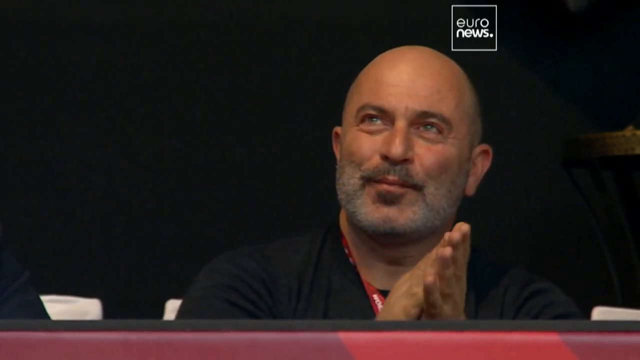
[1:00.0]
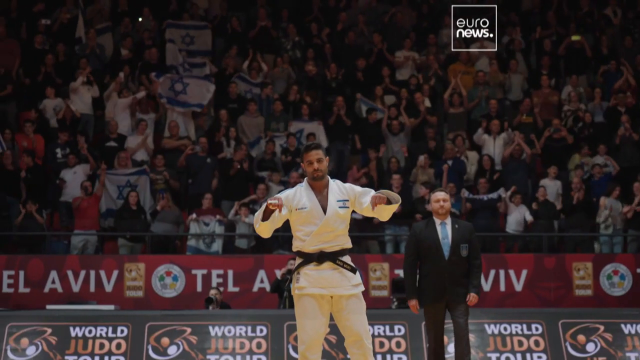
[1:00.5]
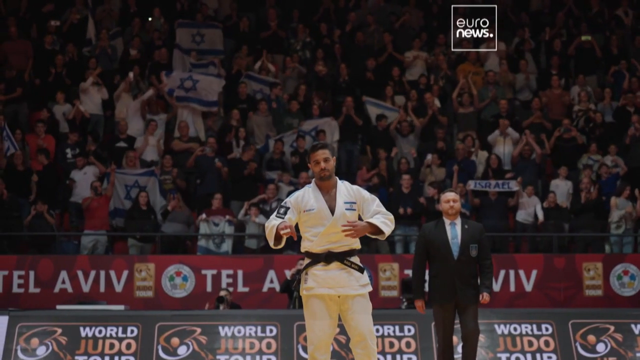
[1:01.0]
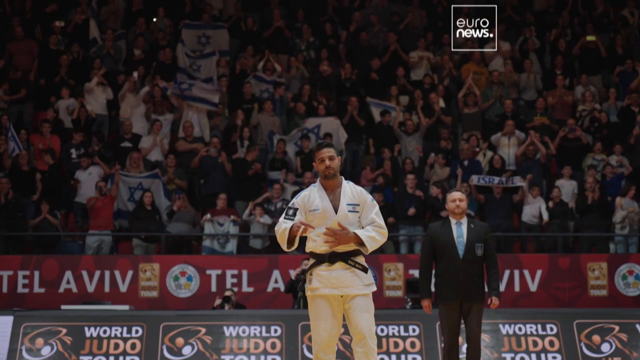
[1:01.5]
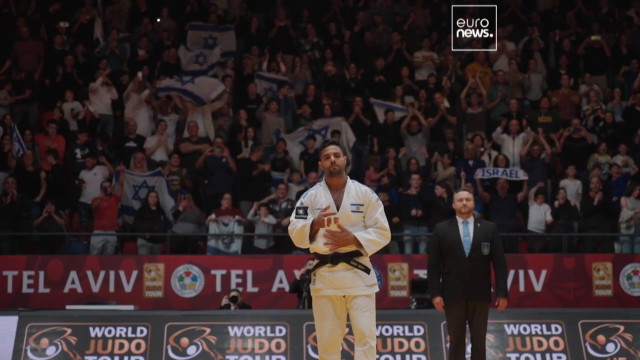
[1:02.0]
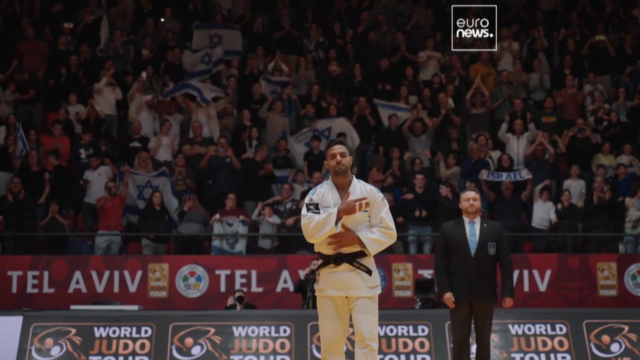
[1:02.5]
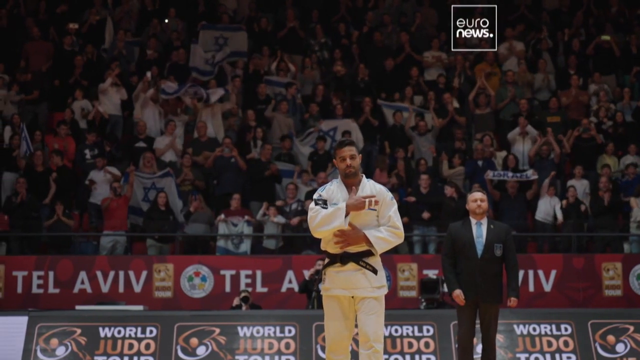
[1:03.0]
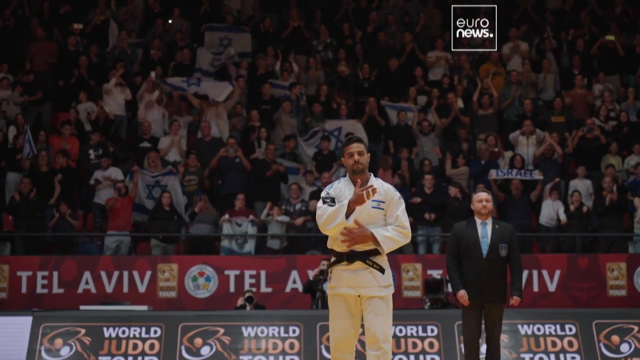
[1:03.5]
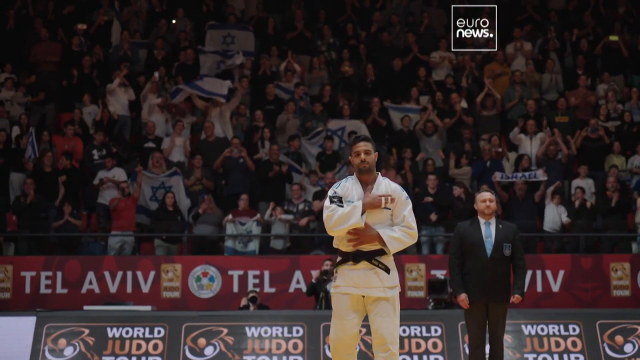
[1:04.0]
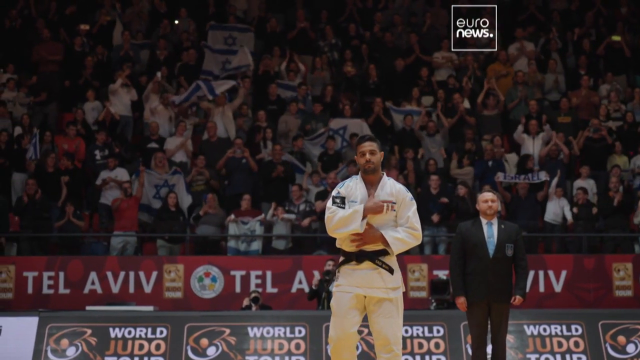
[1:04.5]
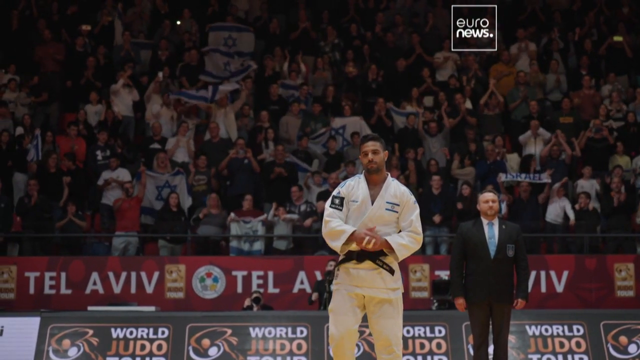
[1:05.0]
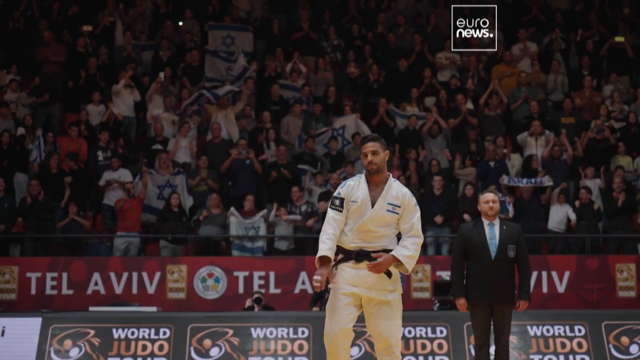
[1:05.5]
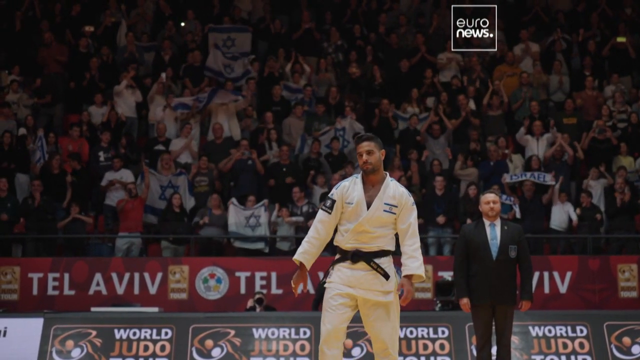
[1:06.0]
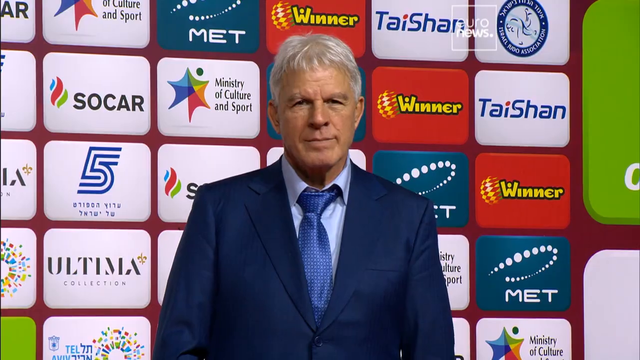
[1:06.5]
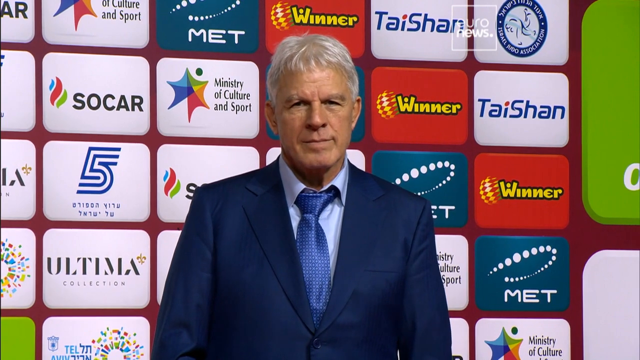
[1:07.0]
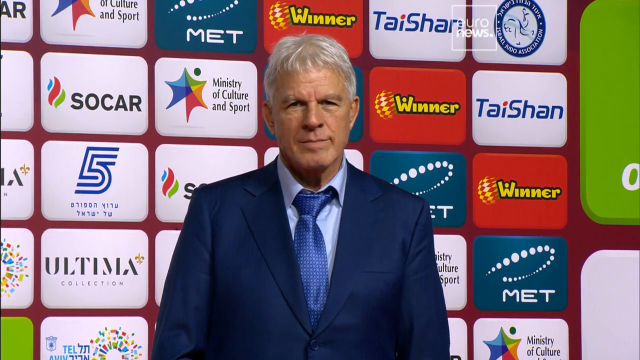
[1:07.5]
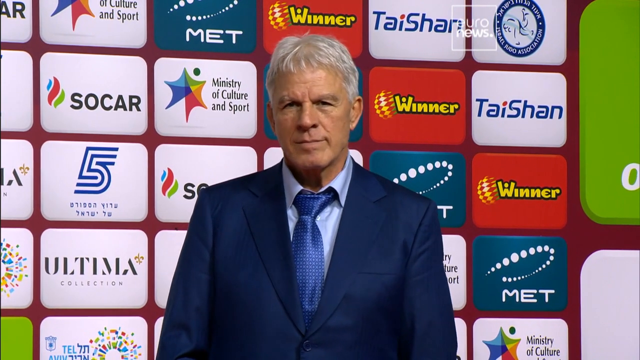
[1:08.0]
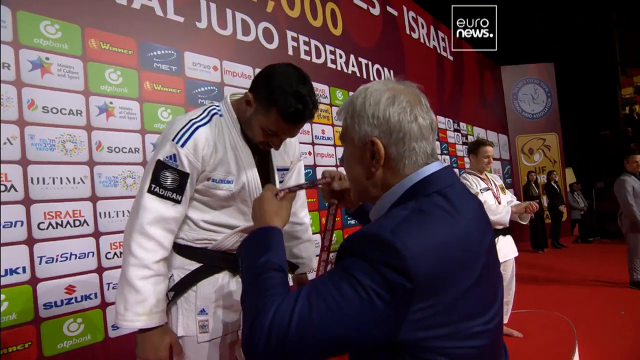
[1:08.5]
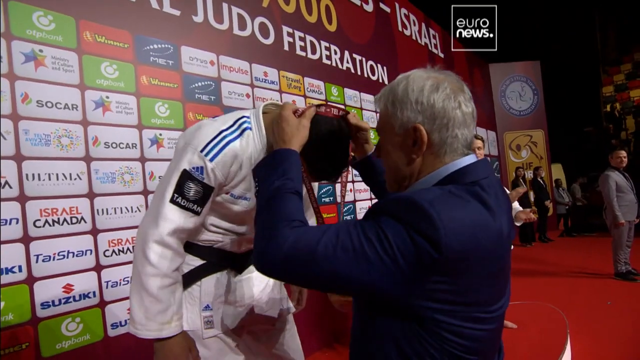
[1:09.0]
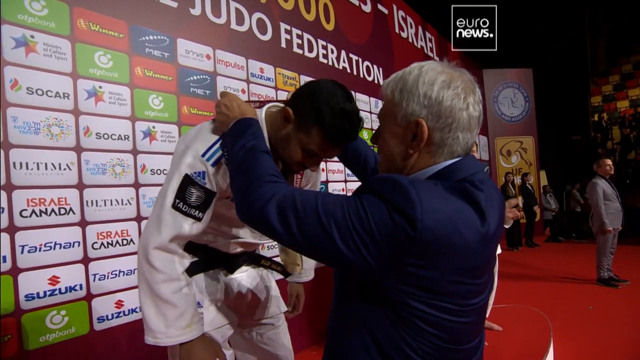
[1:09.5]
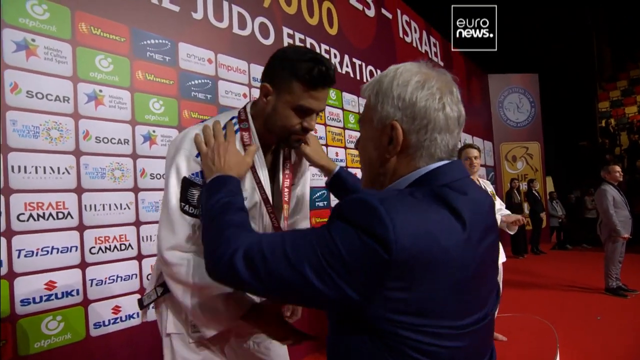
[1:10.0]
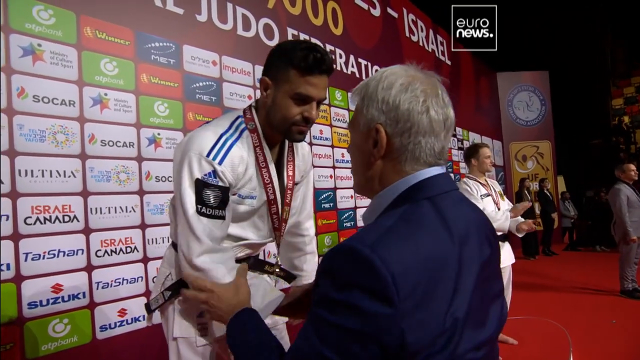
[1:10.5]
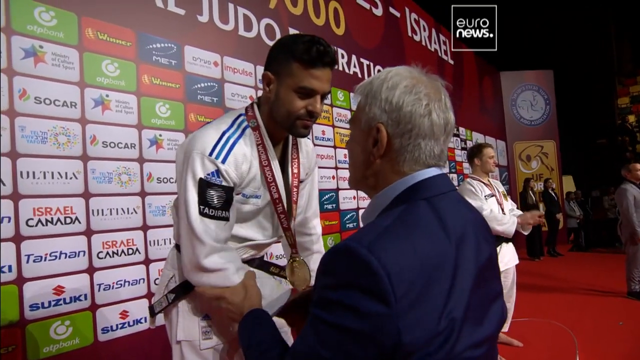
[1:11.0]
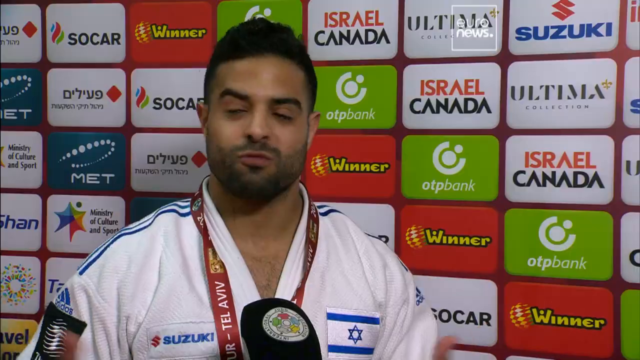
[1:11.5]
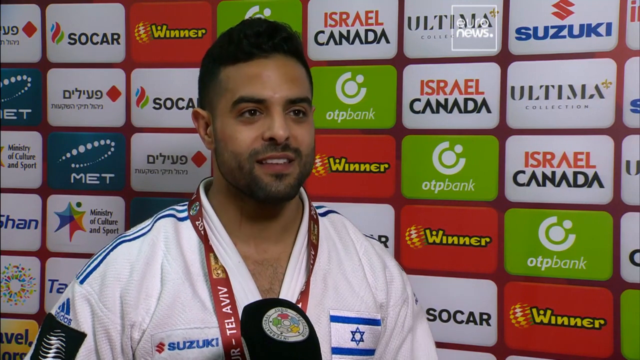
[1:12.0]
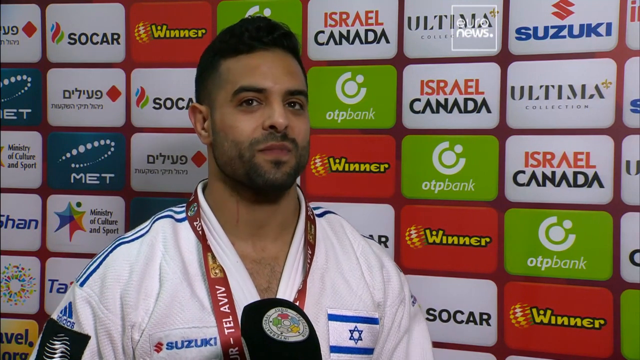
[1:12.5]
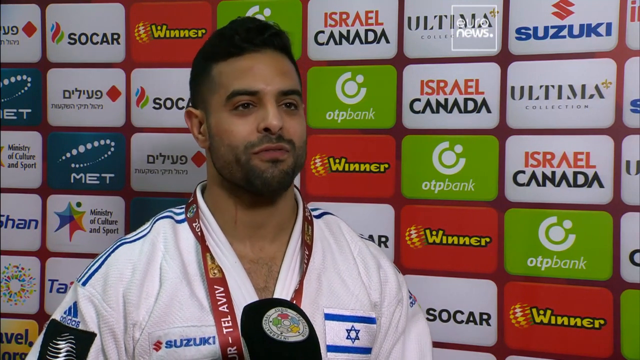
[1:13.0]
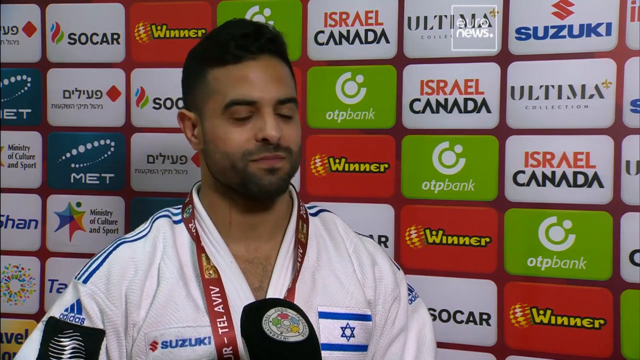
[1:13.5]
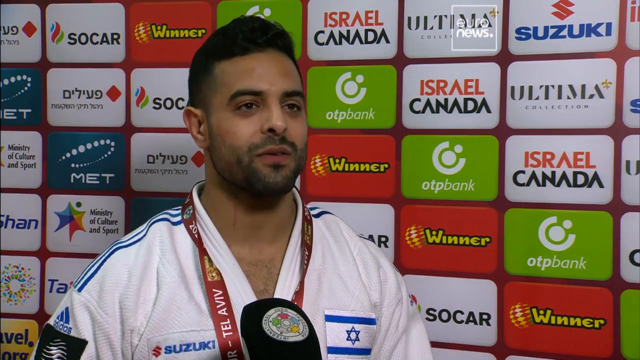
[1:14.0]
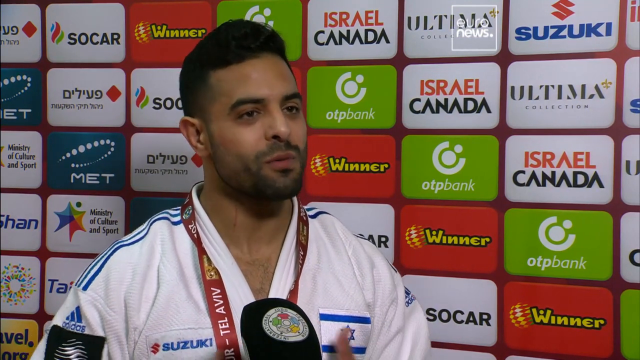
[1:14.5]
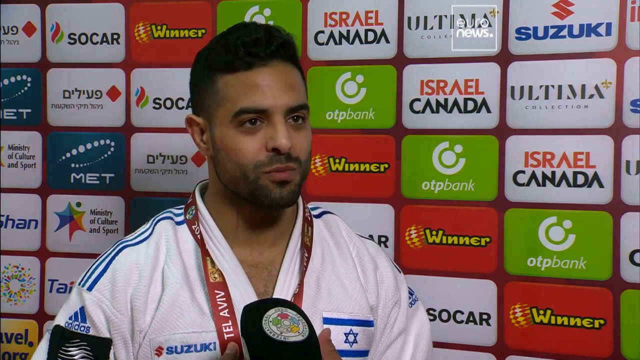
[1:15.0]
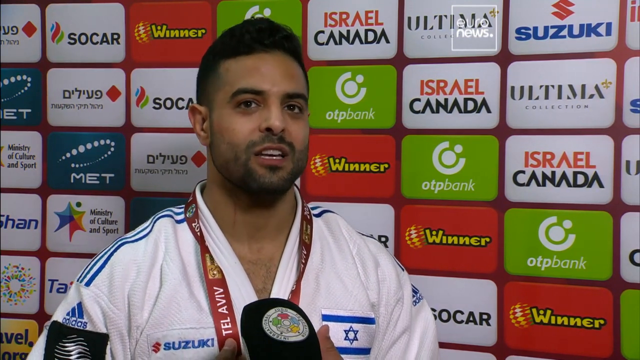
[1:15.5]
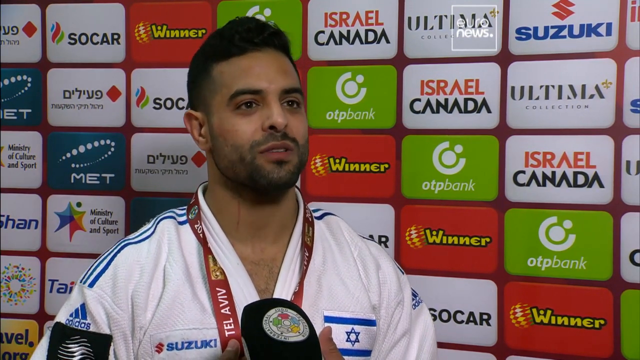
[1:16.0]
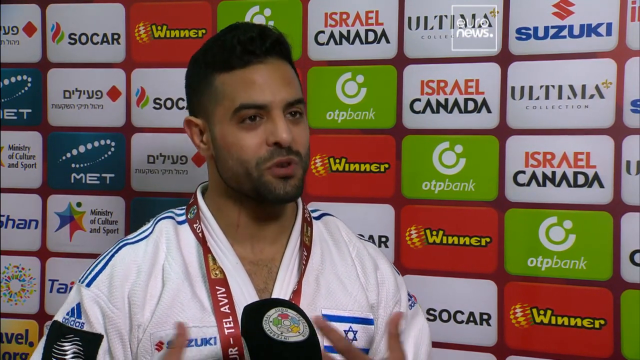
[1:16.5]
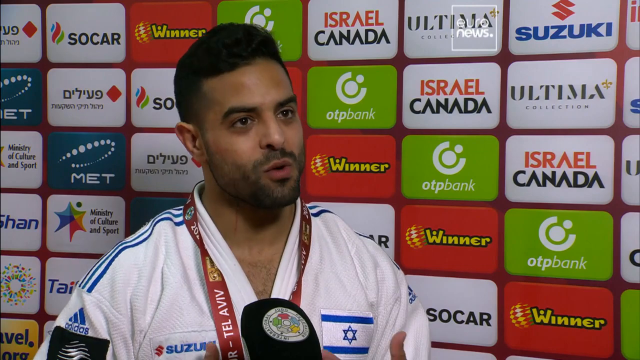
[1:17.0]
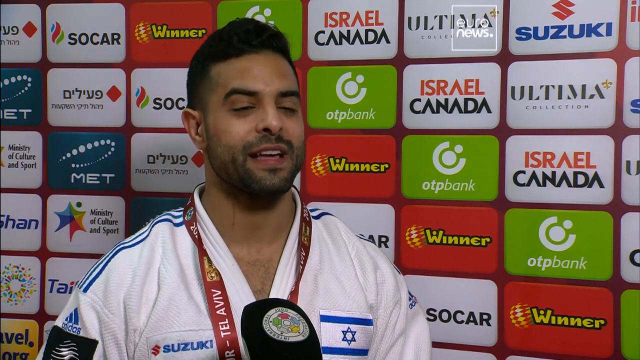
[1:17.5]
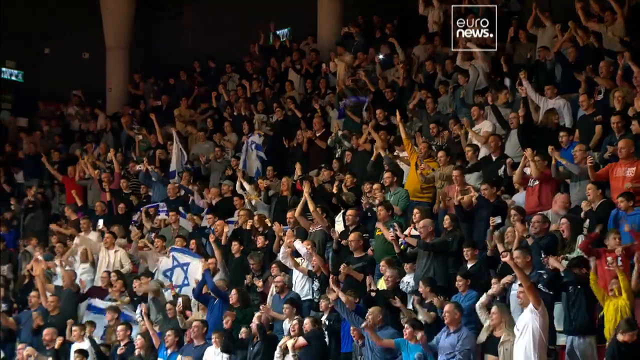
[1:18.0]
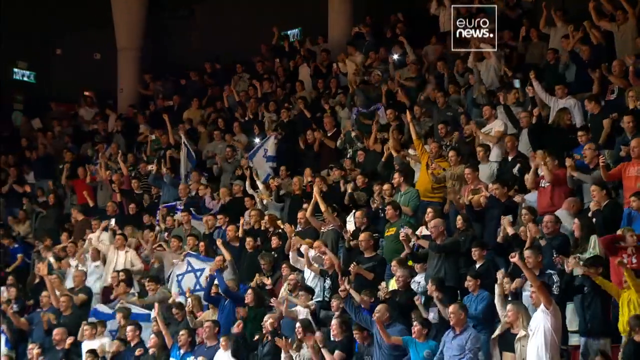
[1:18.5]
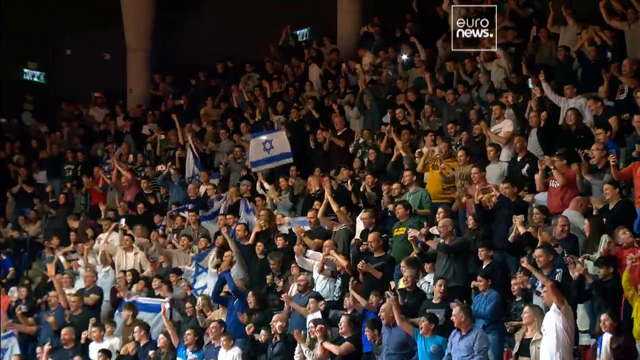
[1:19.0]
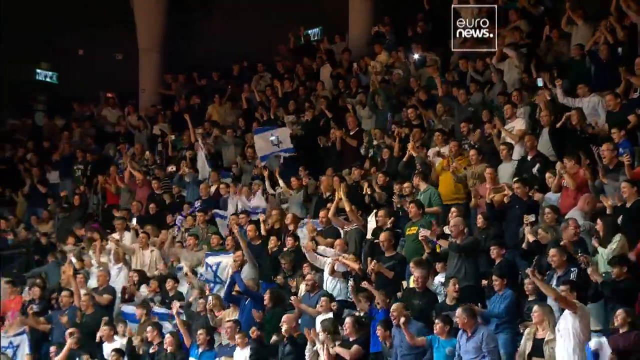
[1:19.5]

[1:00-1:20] In slow motion, the Israeli fighter in his white judo suit and black belt stands in front of a crowd and beats his open palm against his chest over his heart; behind him is a big crowd, many holding Israeli flags. A white-haired man stands in front of an advertisement board with different advertisers. The same white-haired man, wearing a blue jacket, stands in front of the Israeli fighter and puts a medal, apparently gold, around his neck. The fighter then stands in front of a microphone talking, with a badge around his neck that says "Tel Aviv". The crowd cheers. The fighter has apparently won the tournament and is talking to reporters afterward; the sport appears to be judo, judging from the clothing.